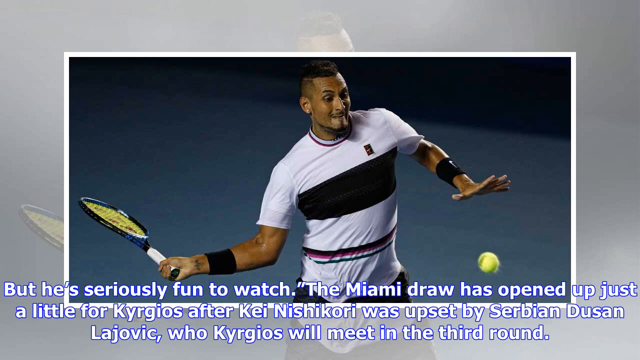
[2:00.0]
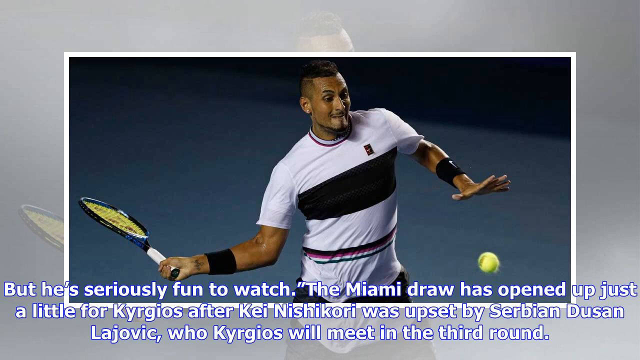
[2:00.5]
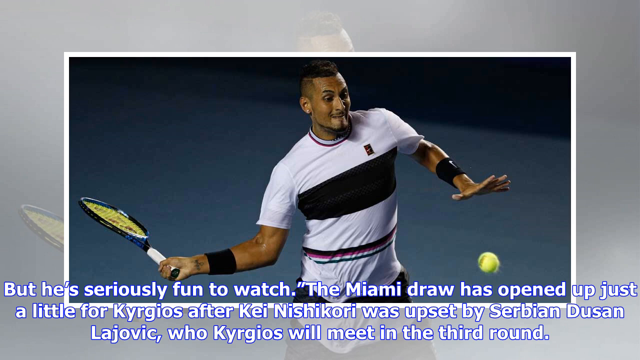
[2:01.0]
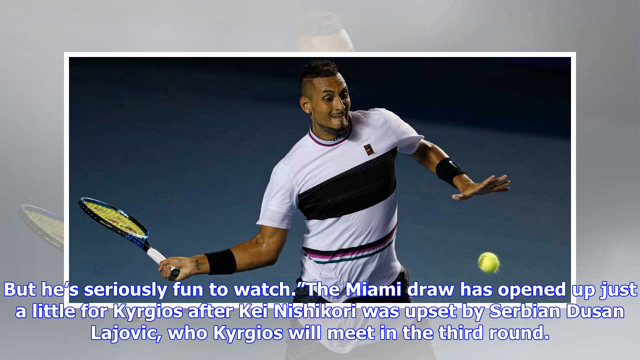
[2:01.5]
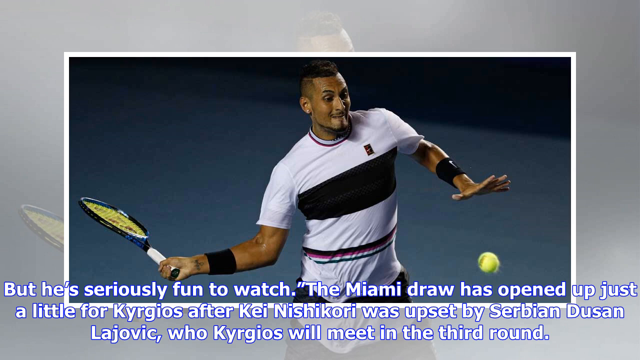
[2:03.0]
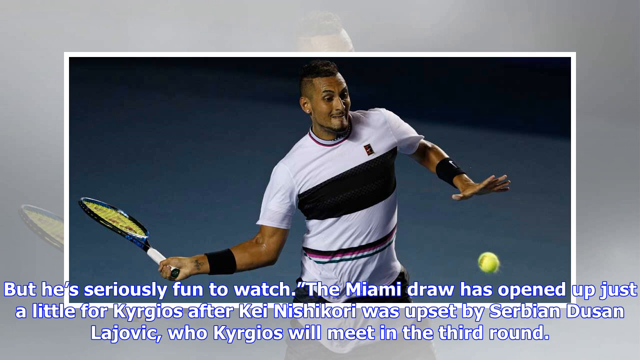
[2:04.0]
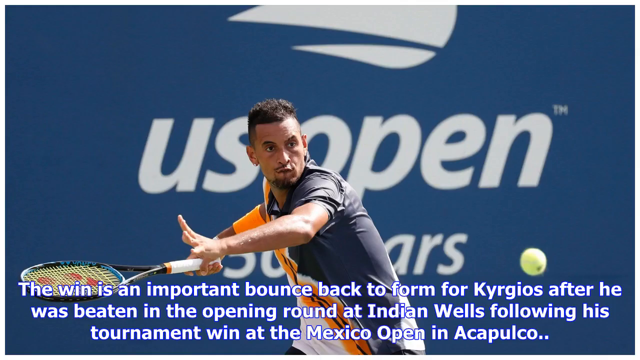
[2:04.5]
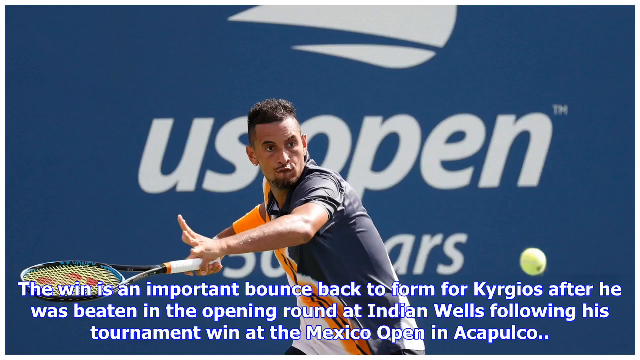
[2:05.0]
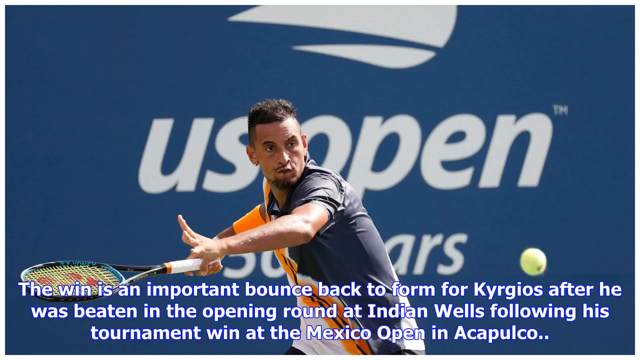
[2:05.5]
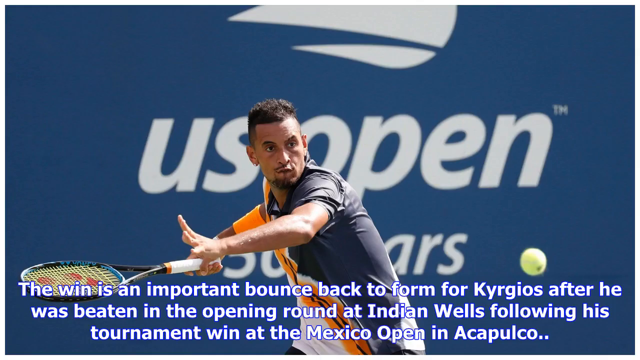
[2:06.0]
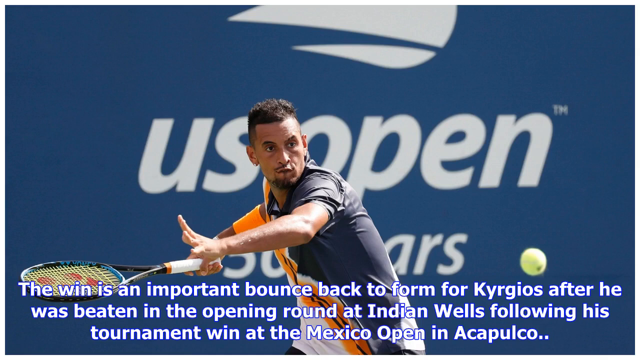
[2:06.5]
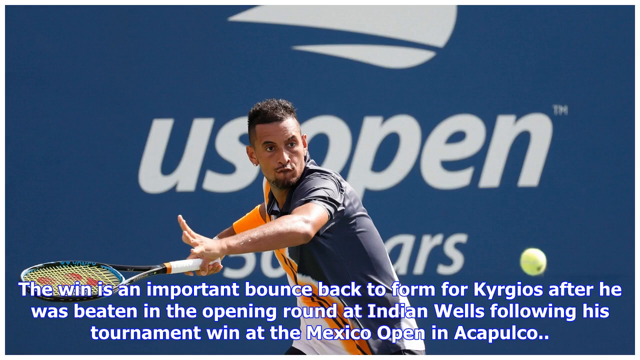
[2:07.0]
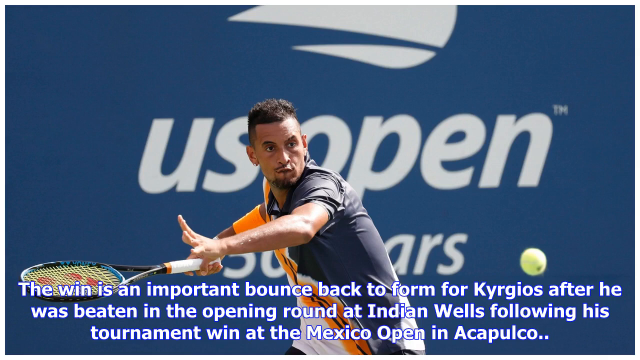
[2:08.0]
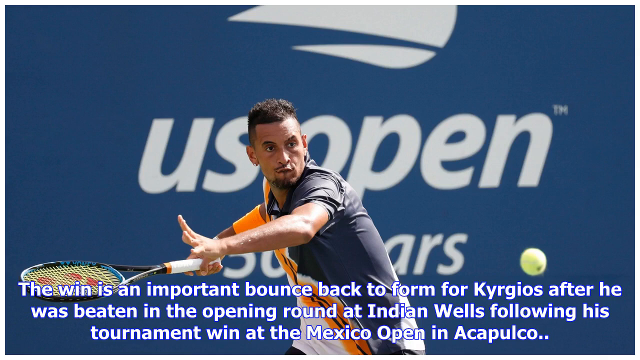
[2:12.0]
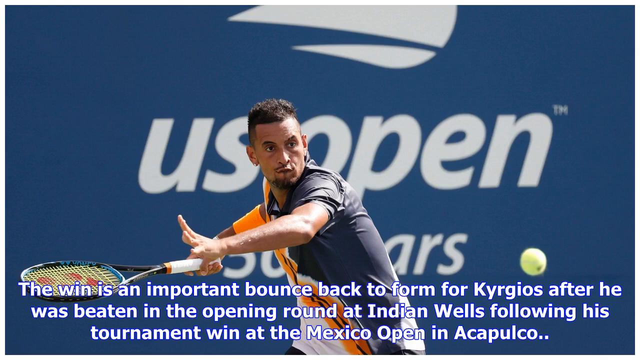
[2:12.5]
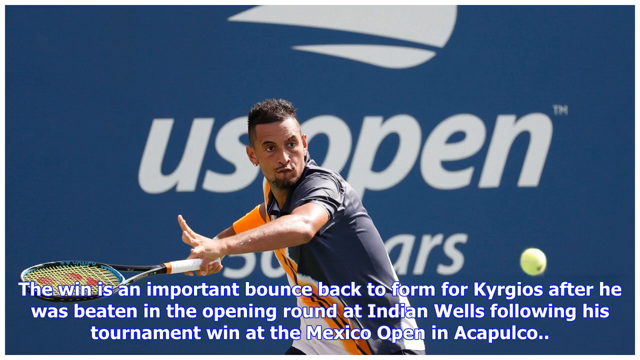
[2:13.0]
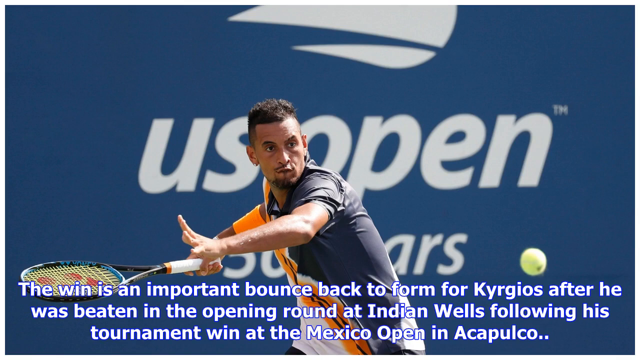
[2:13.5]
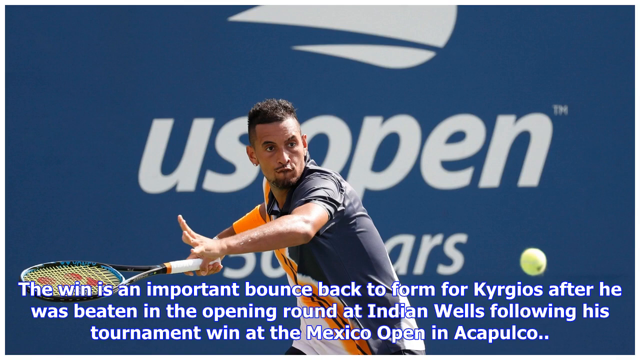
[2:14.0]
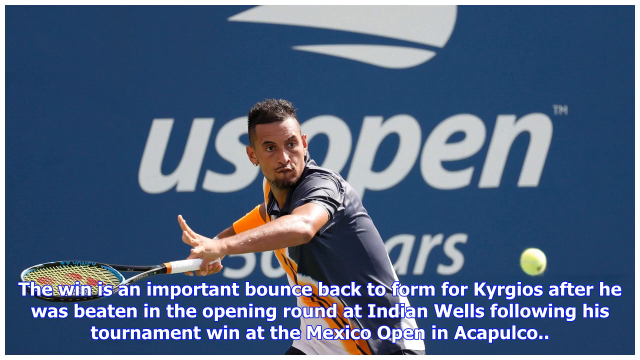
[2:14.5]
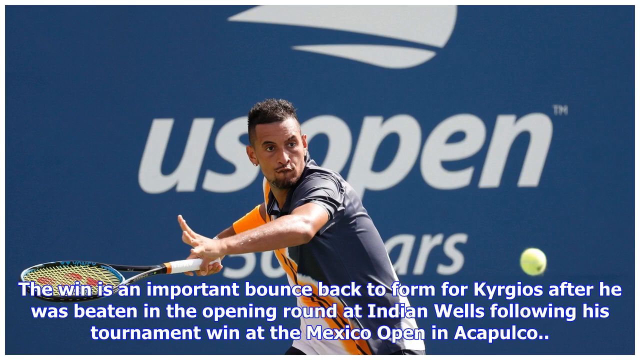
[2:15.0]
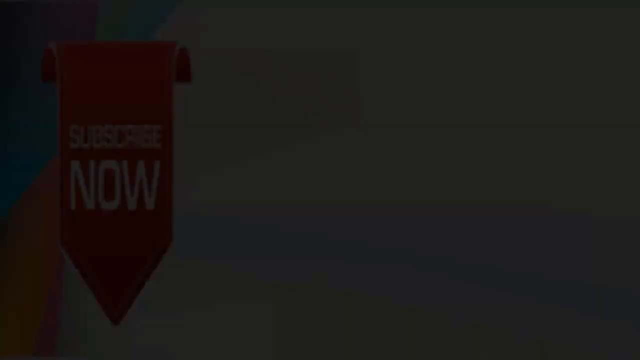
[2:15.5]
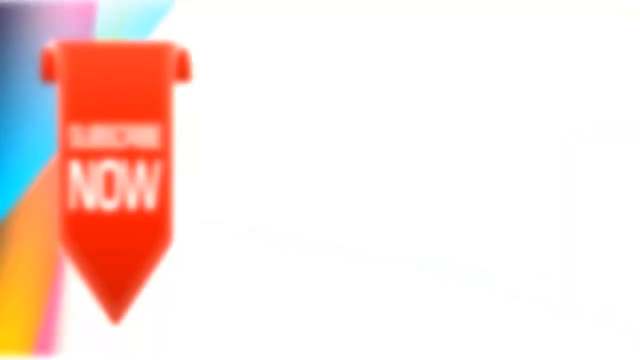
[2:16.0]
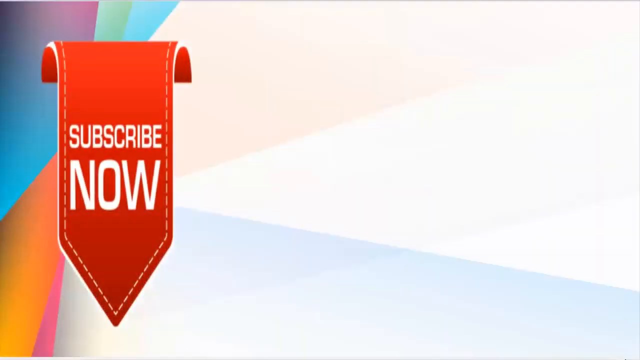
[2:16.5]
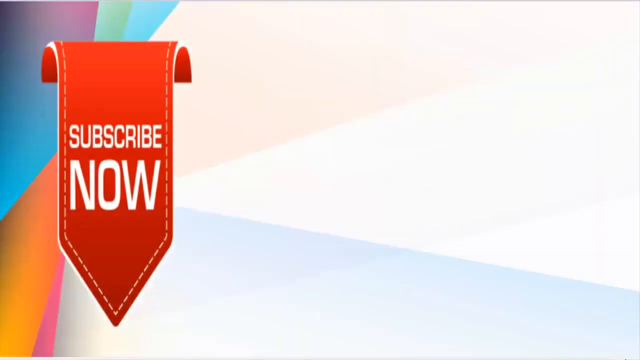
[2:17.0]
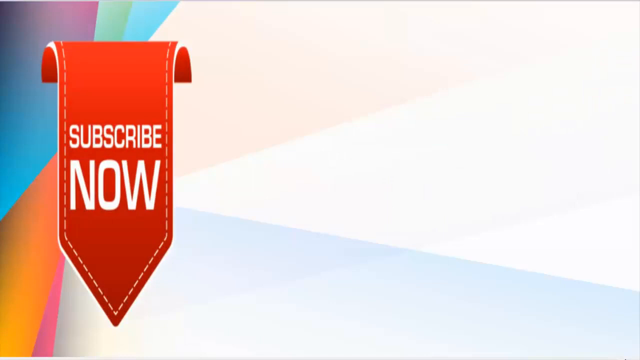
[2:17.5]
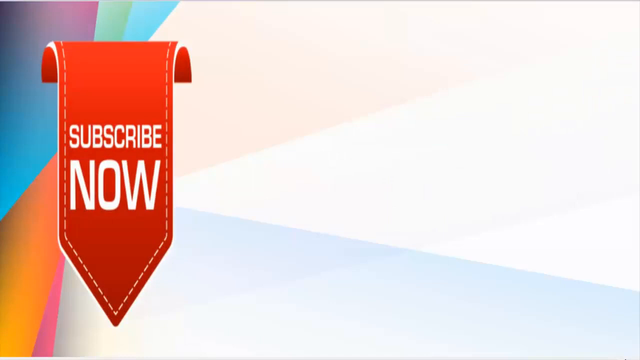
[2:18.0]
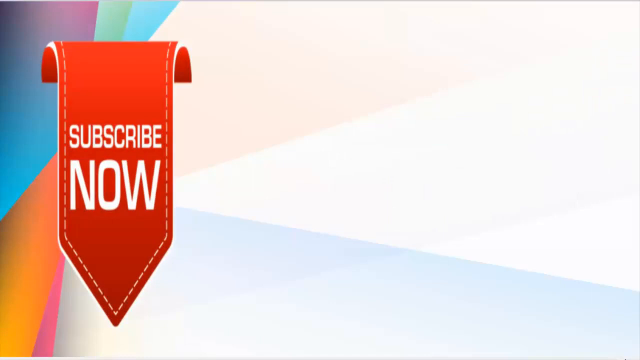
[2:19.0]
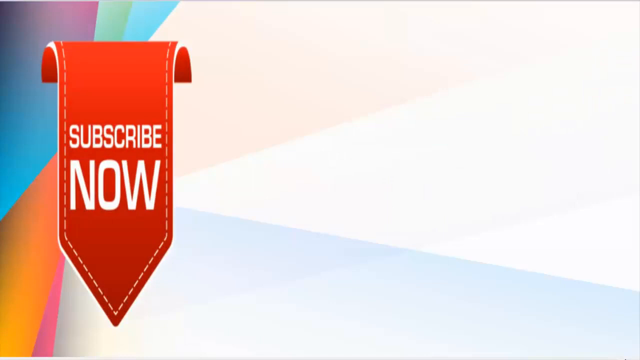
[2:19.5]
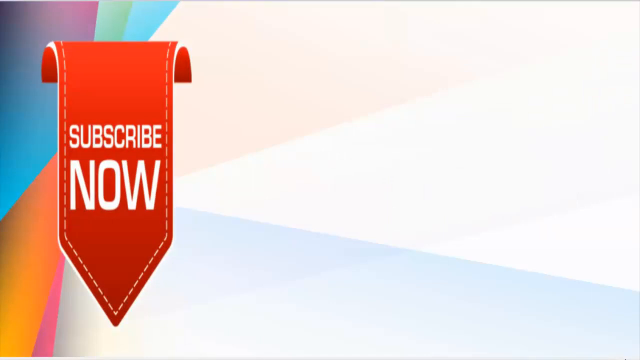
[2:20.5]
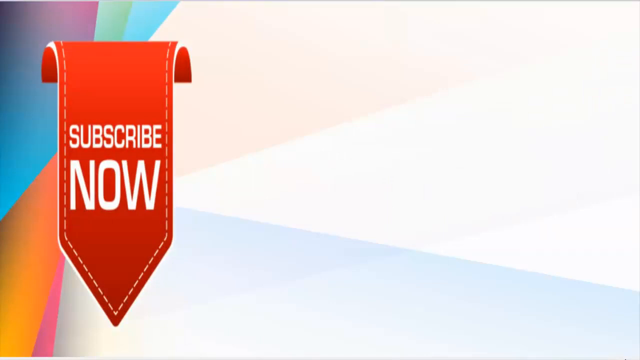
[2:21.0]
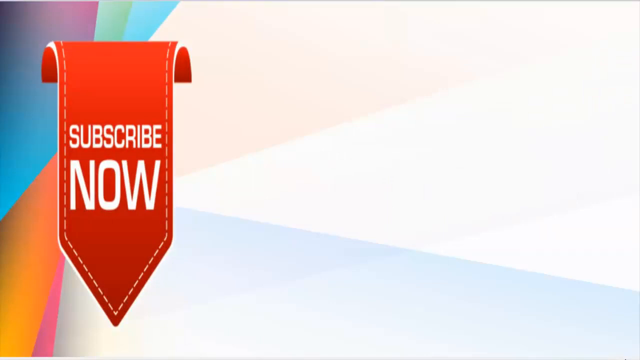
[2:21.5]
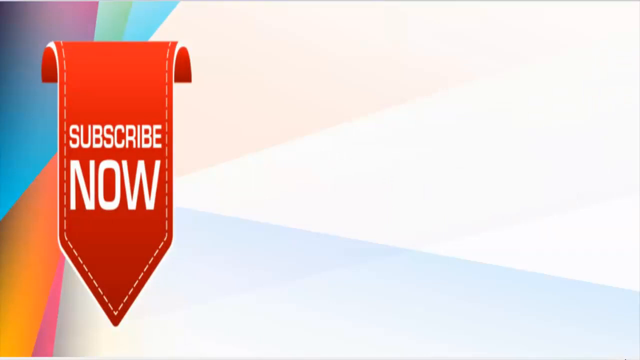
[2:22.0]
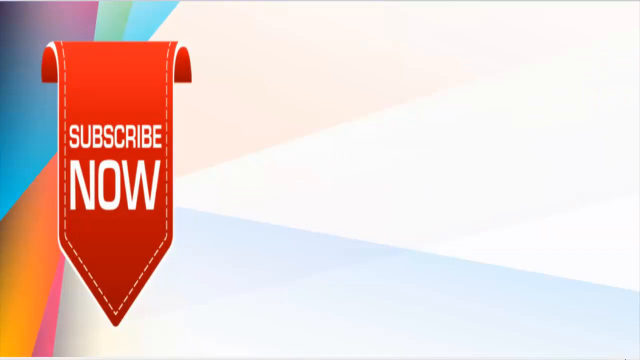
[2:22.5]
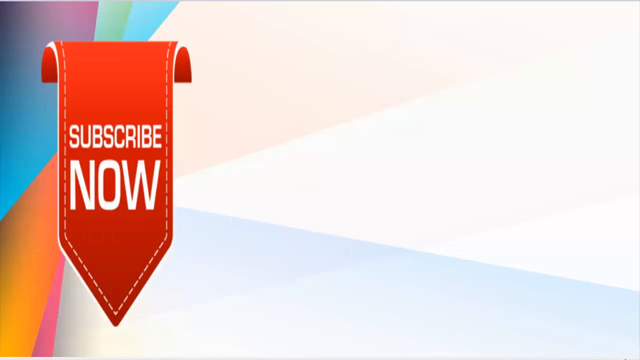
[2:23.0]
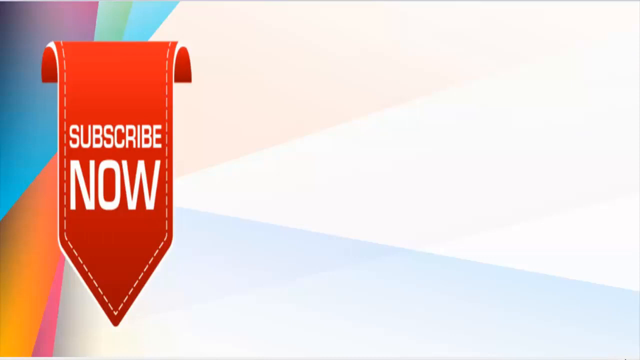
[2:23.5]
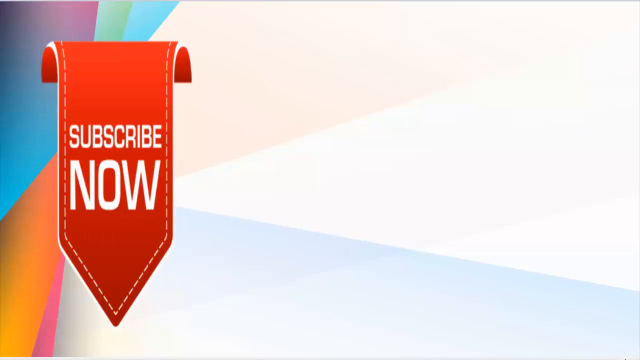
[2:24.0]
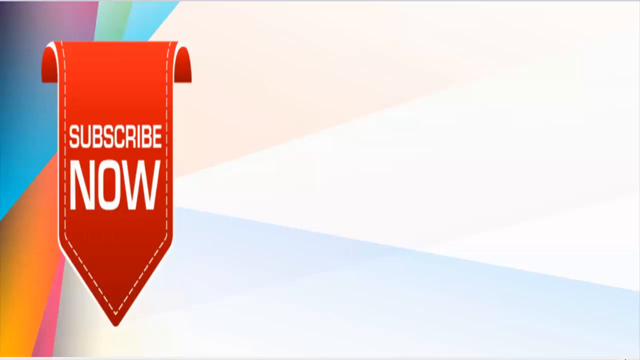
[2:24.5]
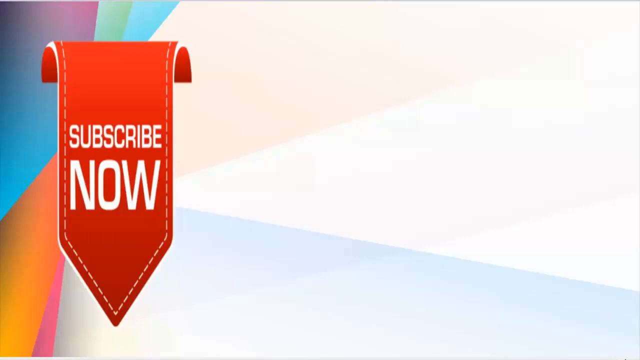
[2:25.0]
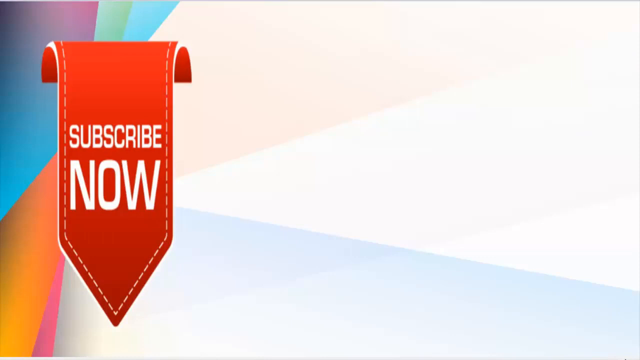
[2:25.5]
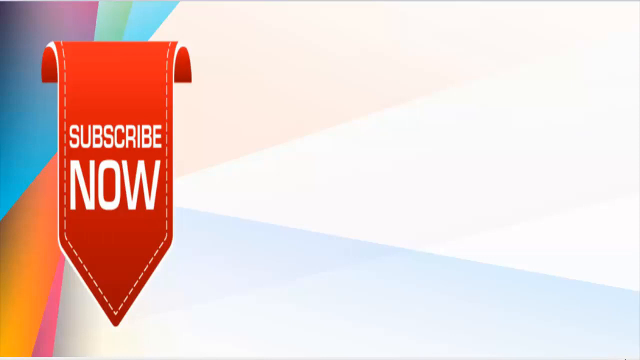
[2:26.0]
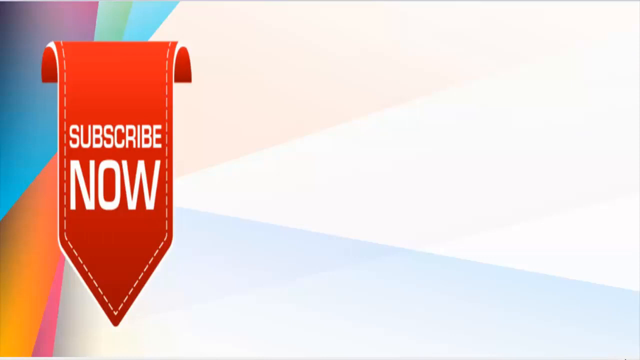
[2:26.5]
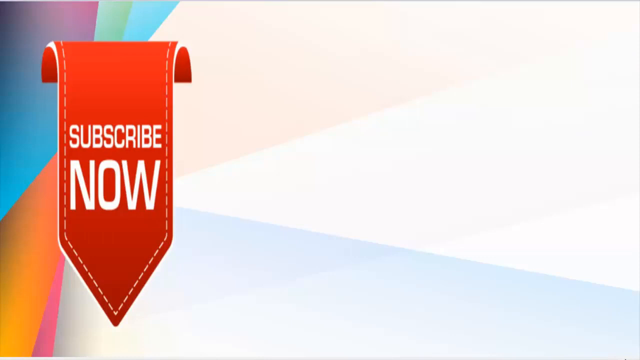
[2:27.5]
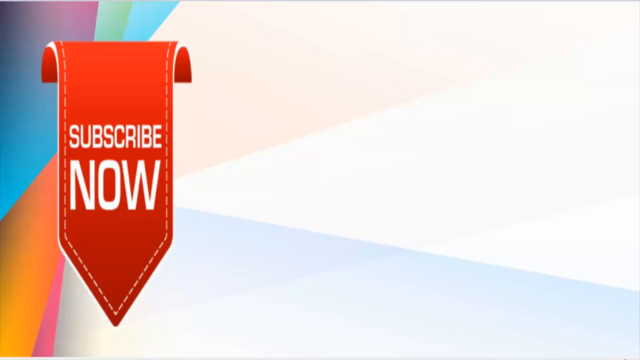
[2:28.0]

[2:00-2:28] The picture of Kyrgios striking the ball appears, followed by another previously seen picture of him about to strike the ball with a blue background reading "US Open" and, not clearly visible, apparently "50 years" or possibly 30. In it he looks razor focused; the racket he holds has a white handle and yellow netting. A long outro follows that says "subscribe now," apparently with a "subscribe now" banner in the middle and, to the right, a large gap where a recommended video or another upload from the channel would seemingly go.